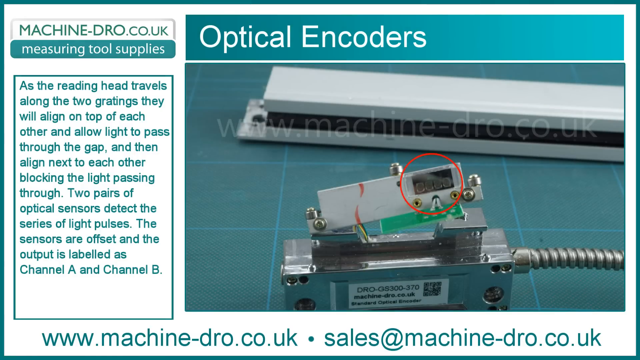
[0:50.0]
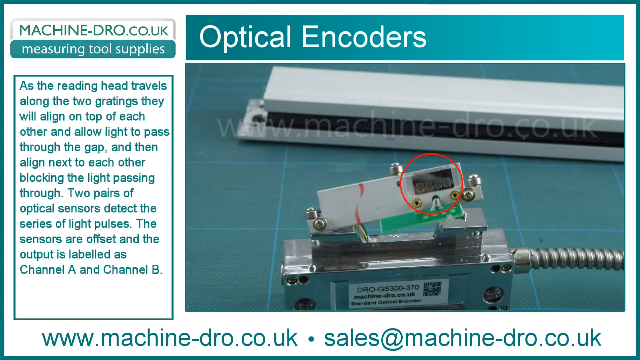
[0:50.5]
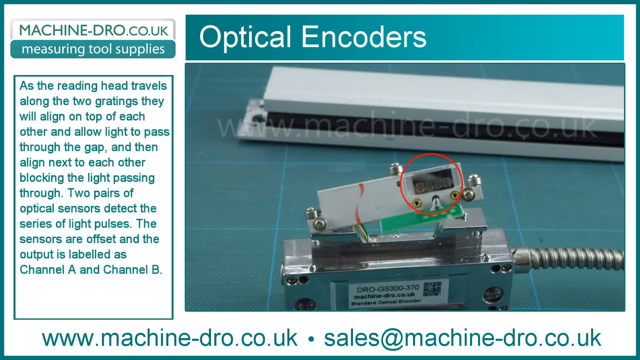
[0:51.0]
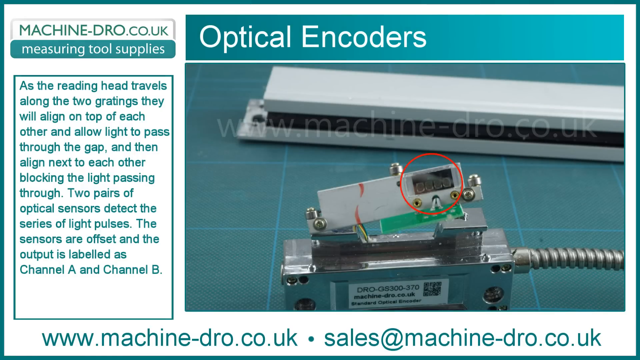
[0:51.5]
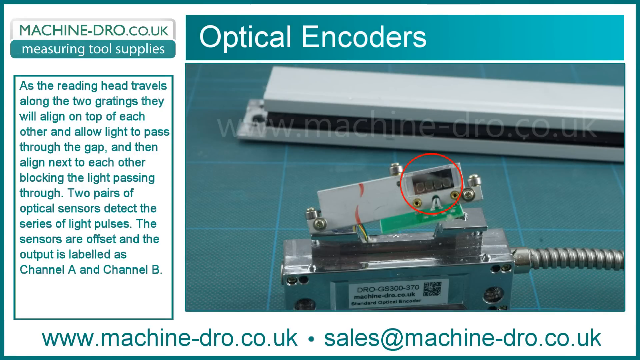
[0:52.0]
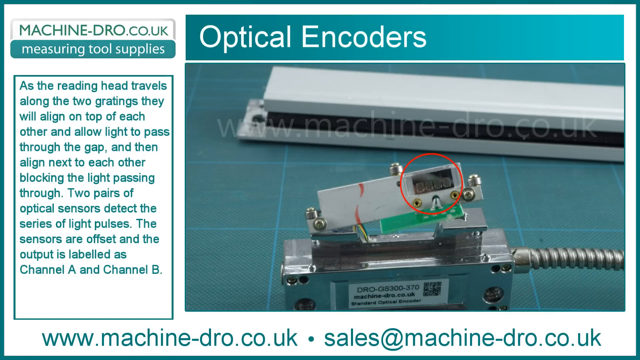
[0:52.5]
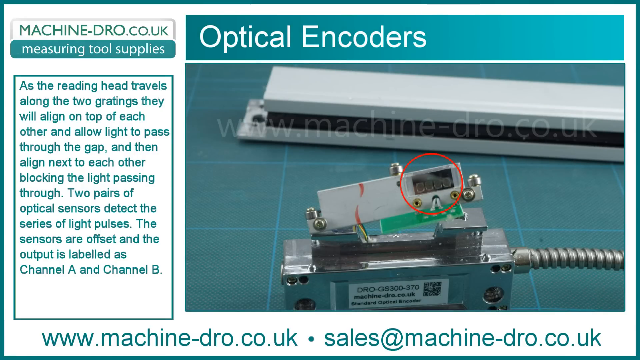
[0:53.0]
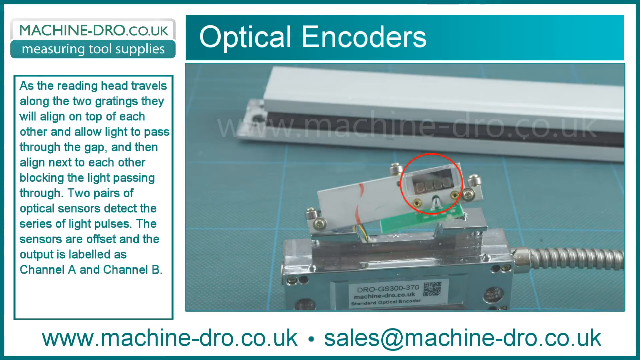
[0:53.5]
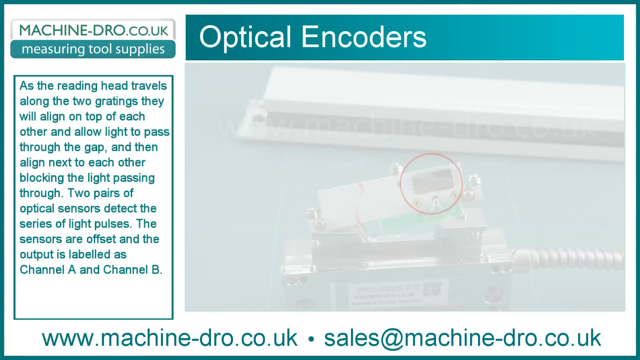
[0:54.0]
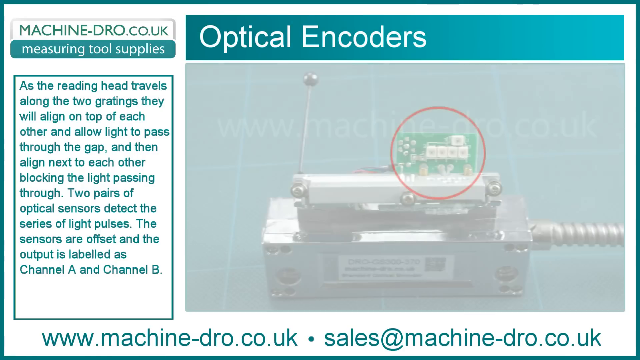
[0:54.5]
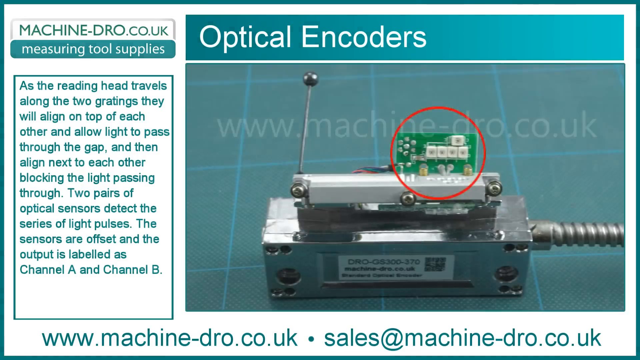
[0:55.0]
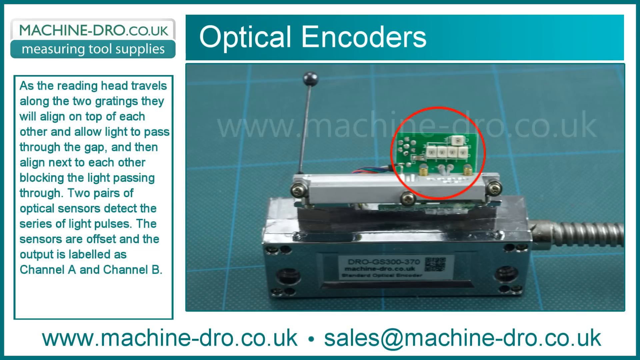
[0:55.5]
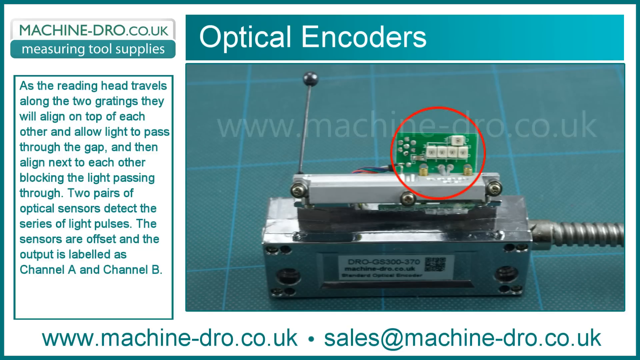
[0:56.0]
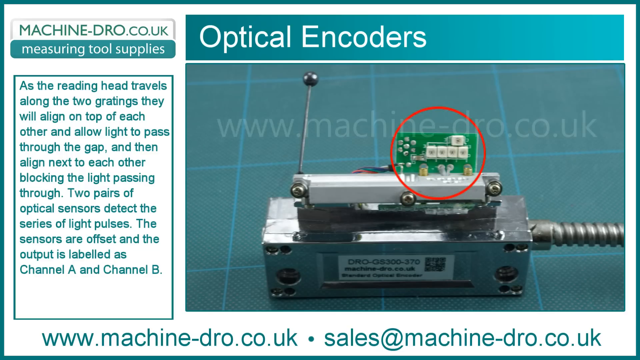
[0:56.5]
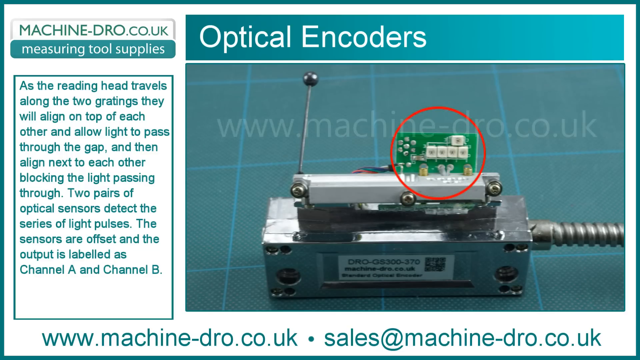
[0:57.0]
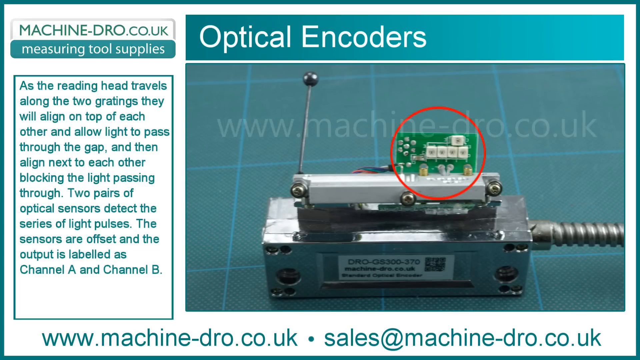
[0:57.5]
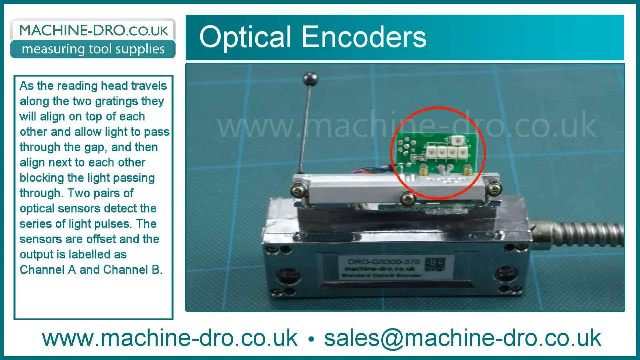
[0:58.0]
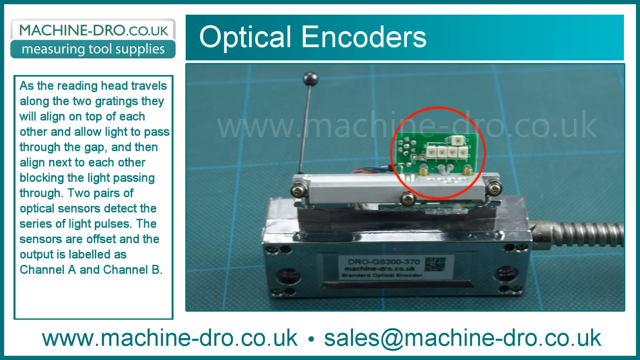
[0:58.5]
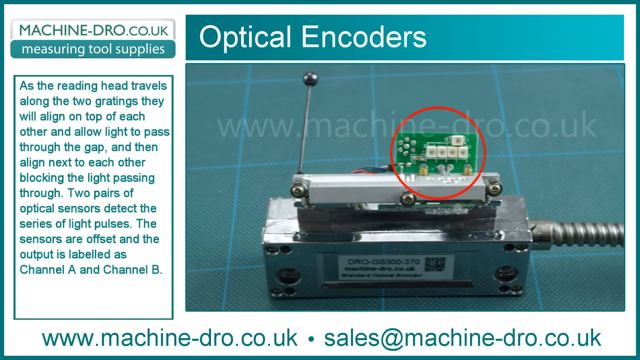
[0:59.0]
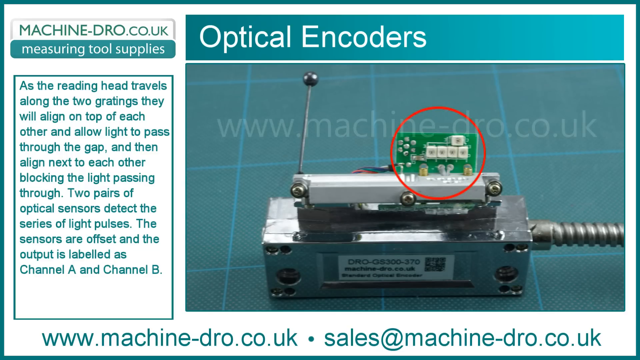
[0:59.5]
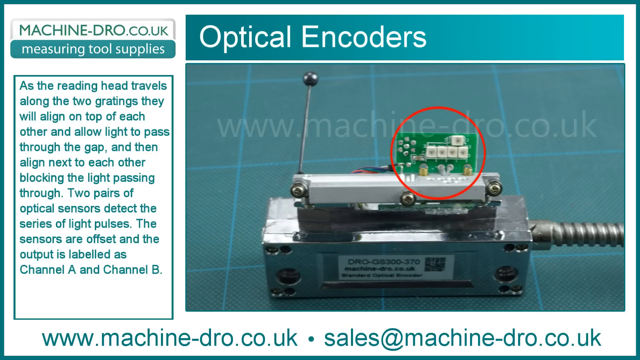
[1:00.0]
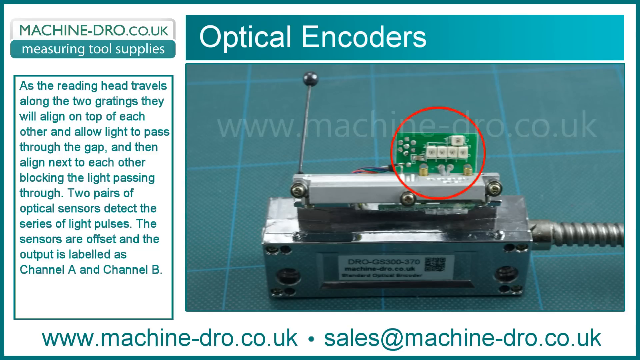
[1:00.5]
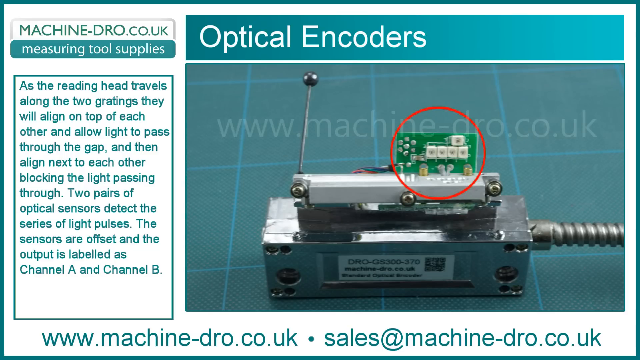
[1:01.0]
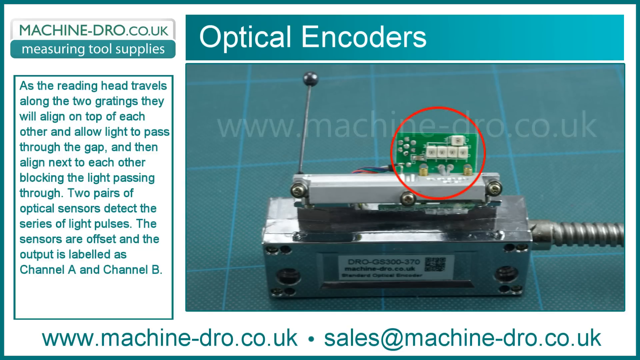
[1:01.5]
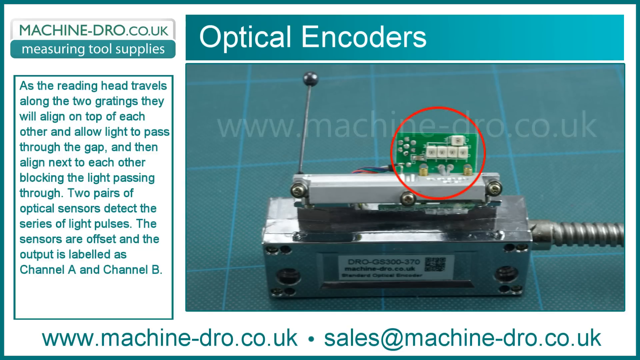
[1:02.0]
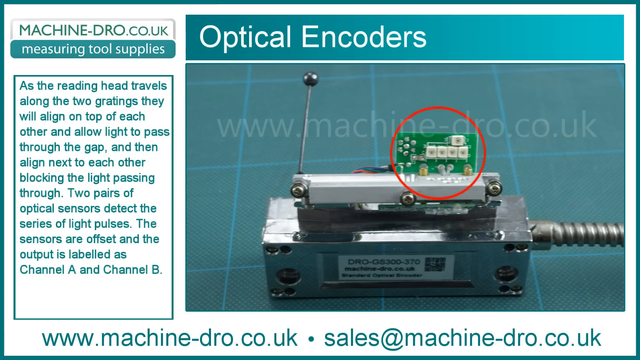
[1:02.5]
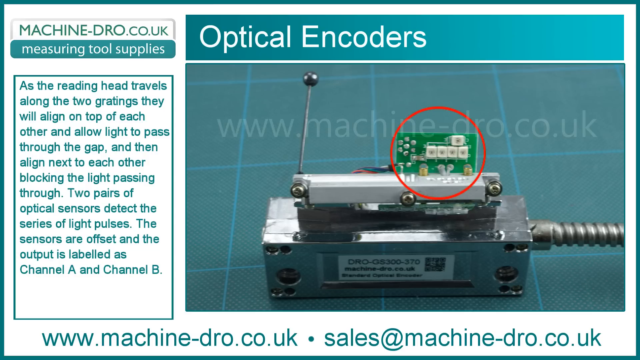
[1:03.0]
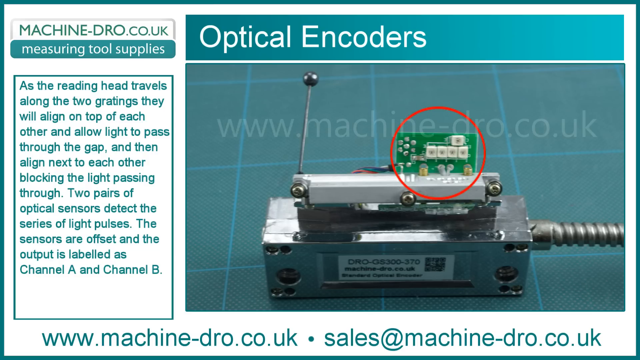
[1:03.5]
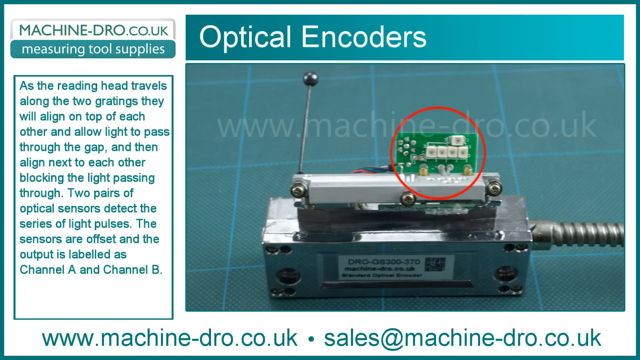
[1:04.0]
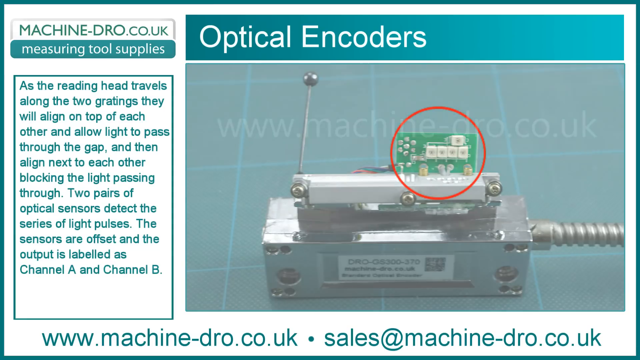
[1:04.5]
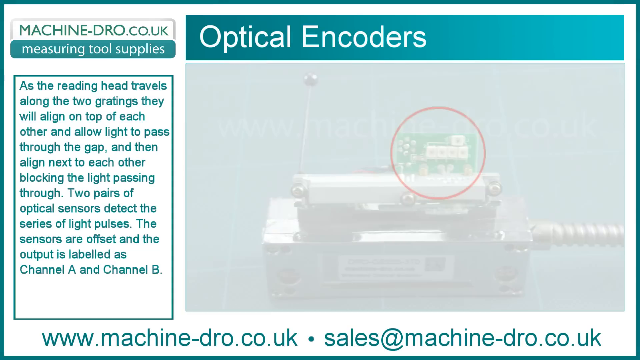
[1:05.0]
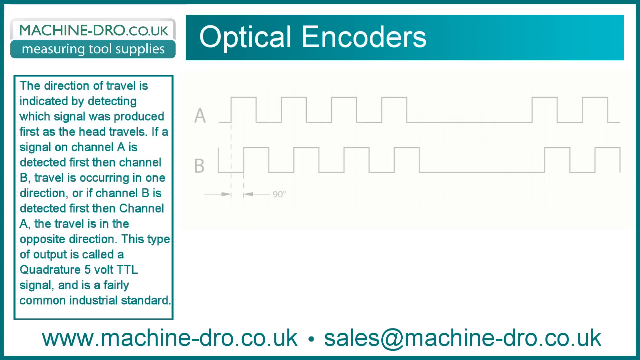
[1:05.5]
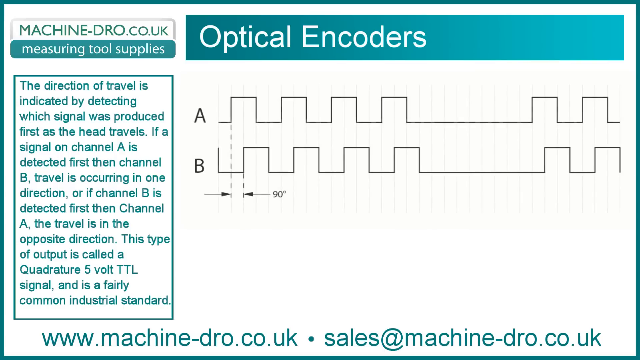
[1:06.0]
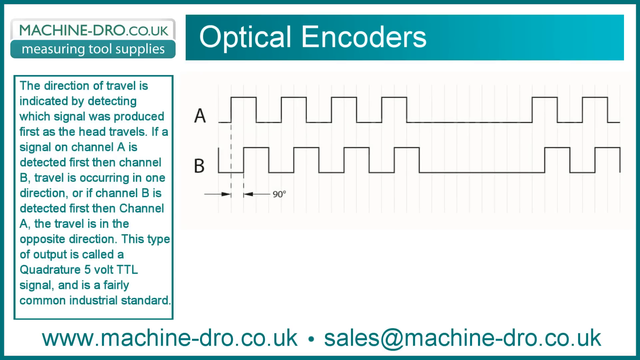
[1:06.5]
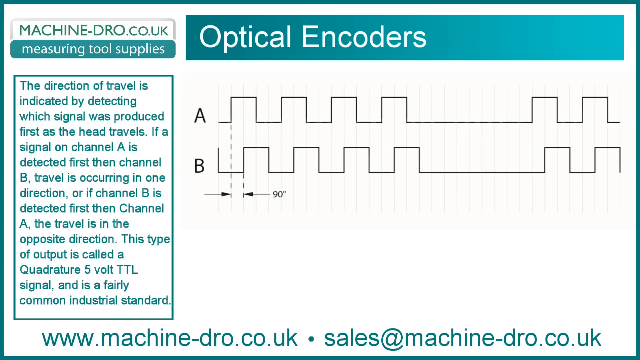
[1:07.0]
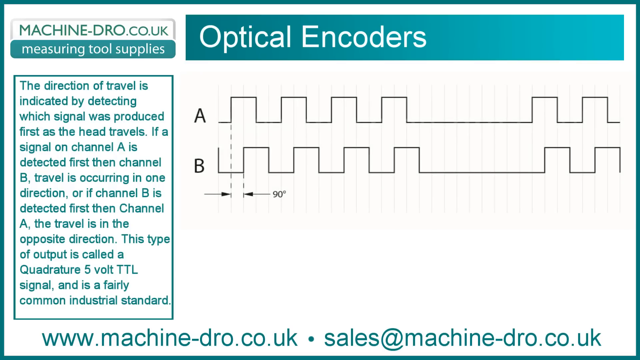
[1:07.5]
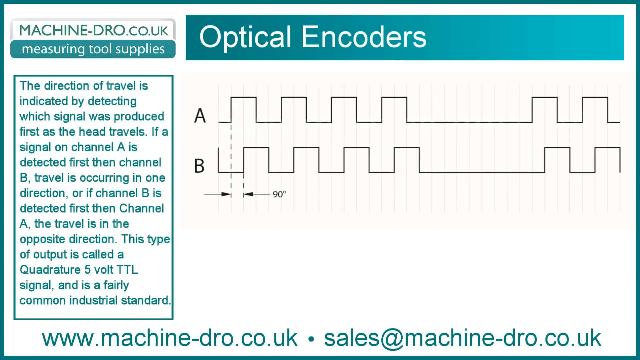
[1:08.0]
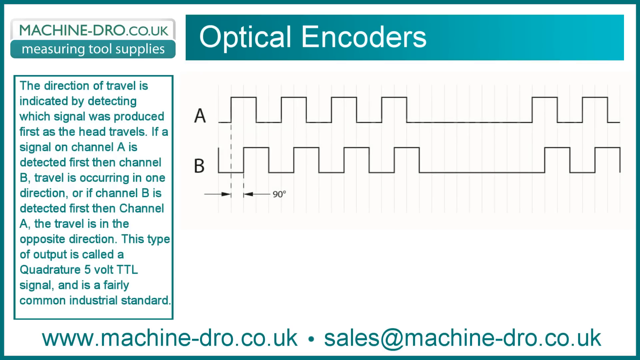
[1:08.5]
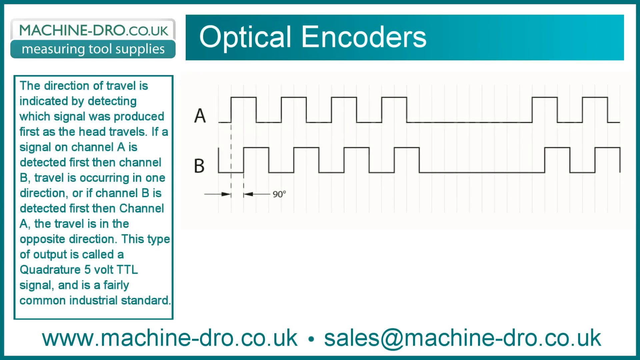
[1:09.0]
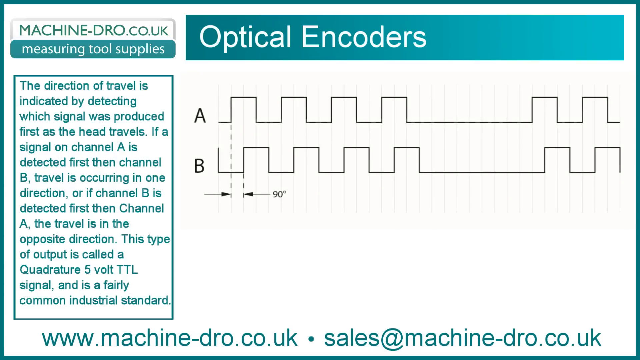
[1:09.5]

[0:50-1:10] The video shows optical encoders from Machinedro.co.uk, a measuring tool supply. A component is shown: a metal box with a sensor on top that pulls up out of it. On the sensor is something green, almost like a motherboard, with connectors. Next comes a black and white graph of channel A and channel B. Channel A goes up and down, with squared tops and squared bottoms, and B goes the opposite way. Text says "the direction of travel is indicated by detecting which signal was produced," and the graph shows A and B traveling in opposite ways.